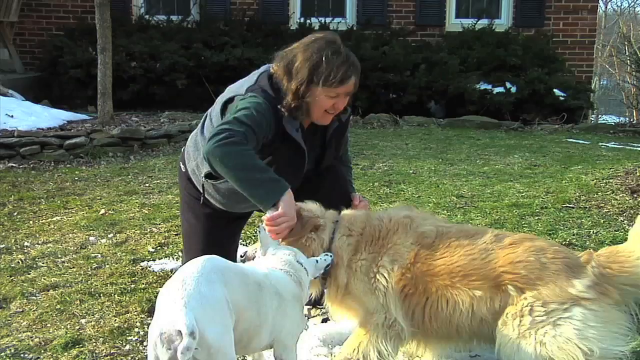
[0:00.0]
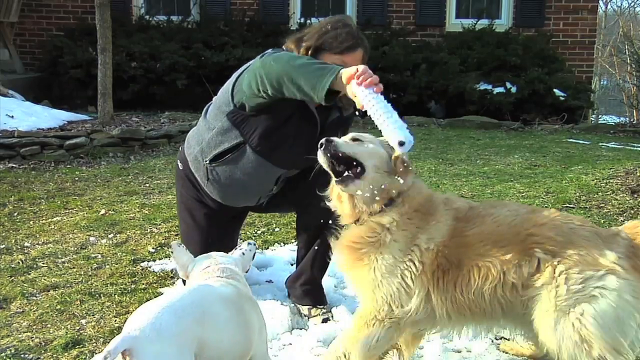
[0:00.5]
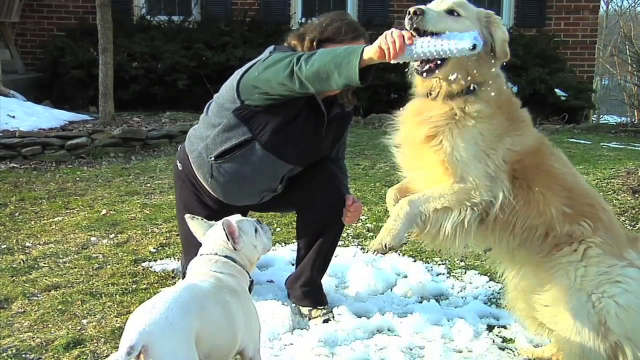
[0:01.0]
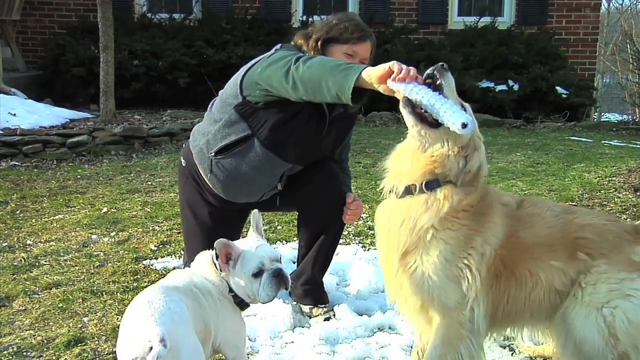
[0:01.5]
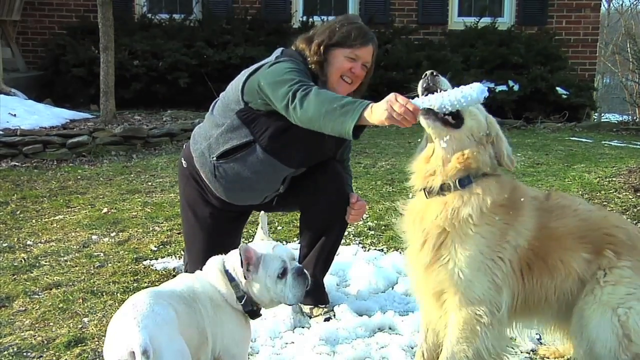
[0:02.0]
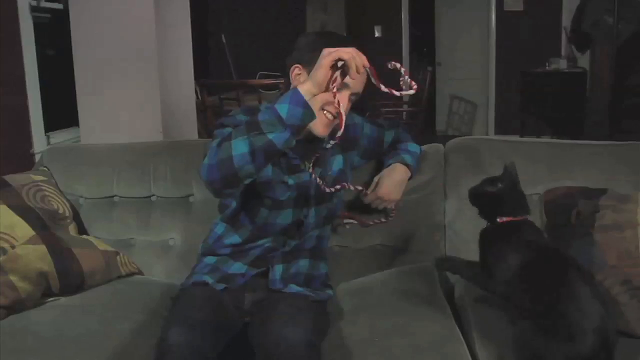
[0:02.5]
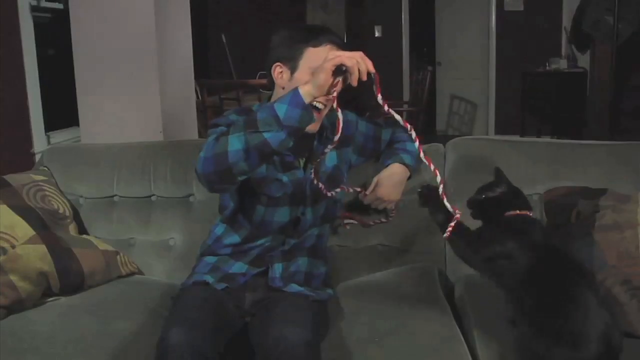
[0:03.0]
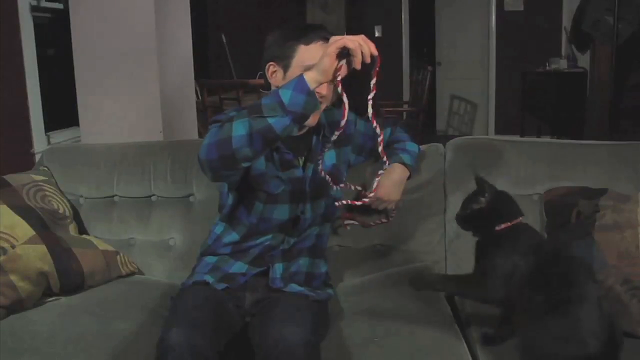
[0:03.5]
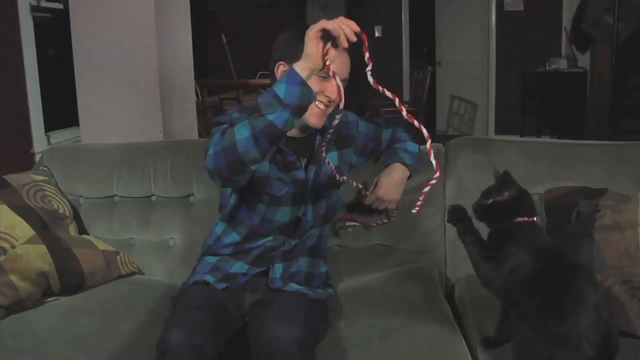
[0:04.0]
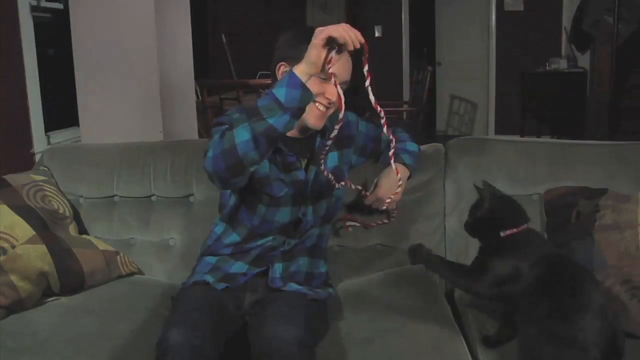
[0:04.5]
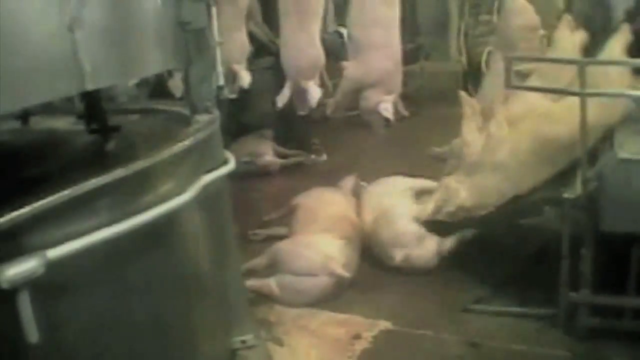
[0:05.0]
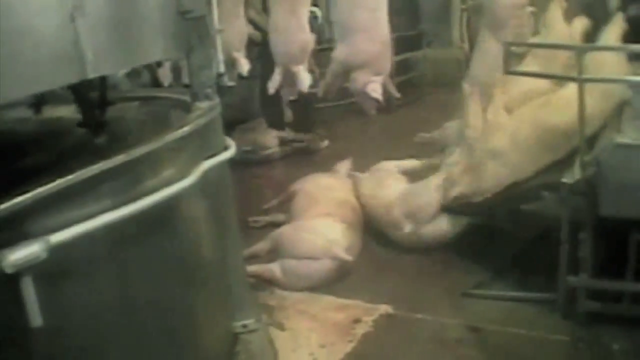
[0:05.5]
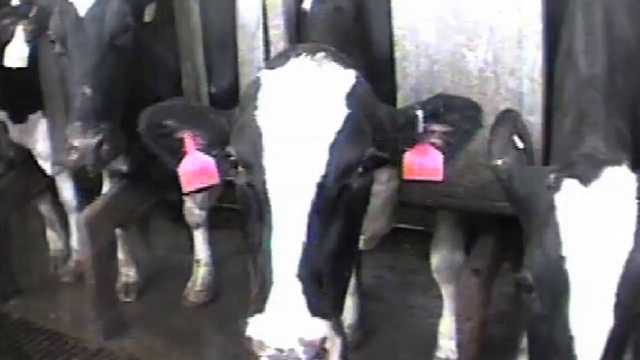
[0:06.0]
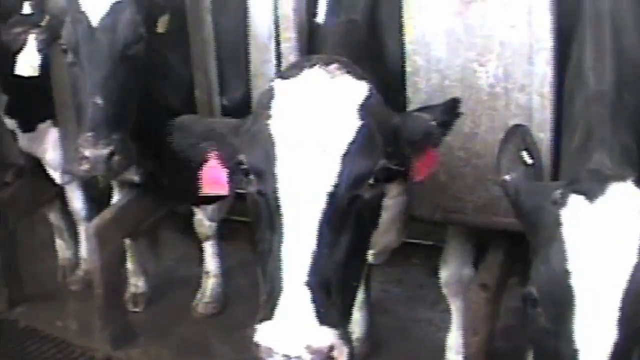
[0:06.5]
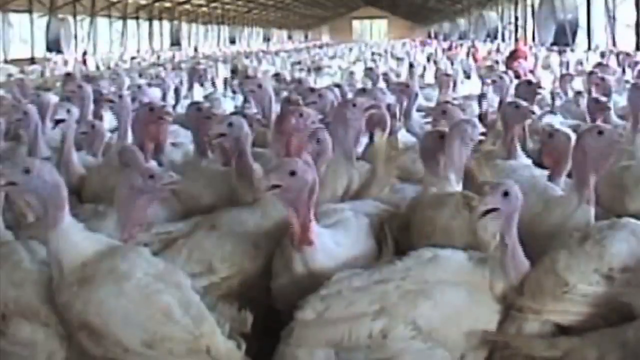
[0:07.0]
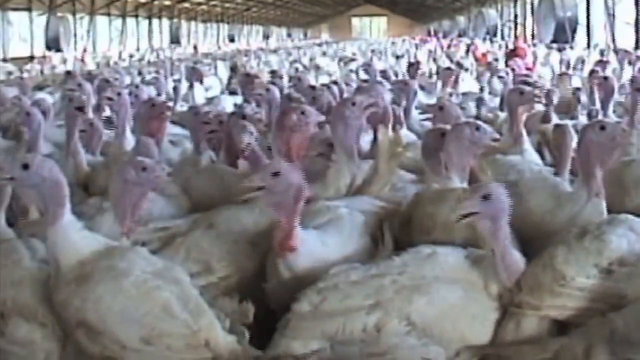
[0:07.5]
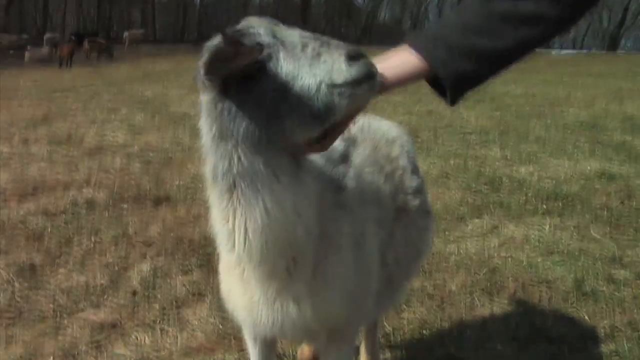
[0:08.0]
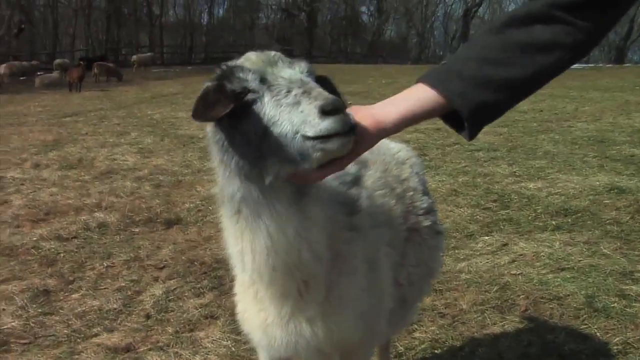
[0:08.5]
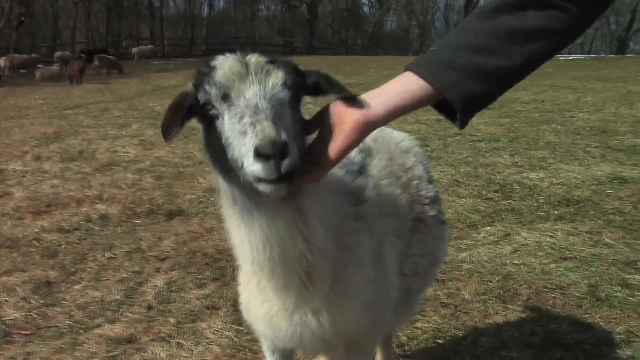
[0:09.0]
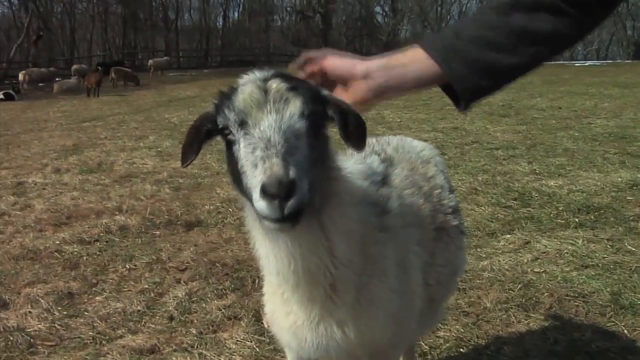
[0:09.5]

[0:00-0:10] A middle-aged woman plays with two large dogs in the snow; one is perhaps a French bulldog, and the other is a larger yellow Labrador. The scene changes to a black cat on a gray couch with its white male owner, playing with a rope. Next comes a pig factory with pigs hanging in the air, followed by stalls of cows and then herds of chickens indoors; the pigs, cows and chickens are presumably being butchered. The video then shows a goat being petted by a white hand, with other goats far in the distance in the background and bare woods.